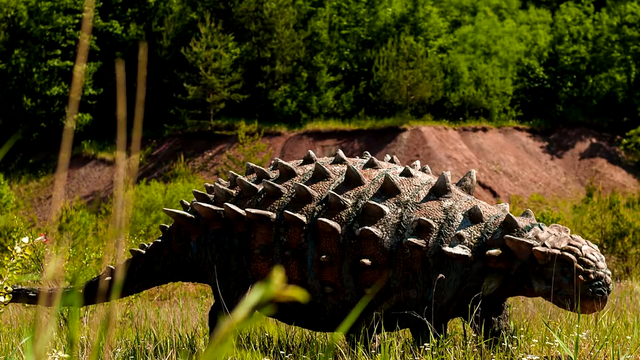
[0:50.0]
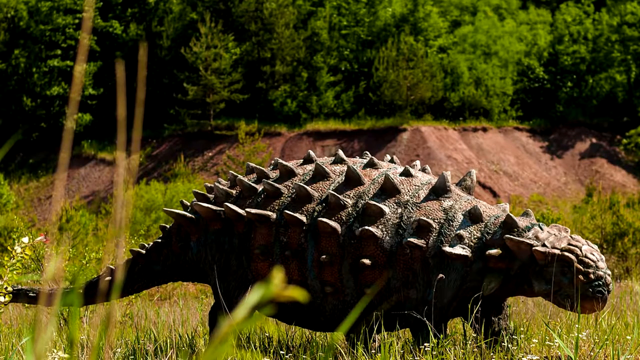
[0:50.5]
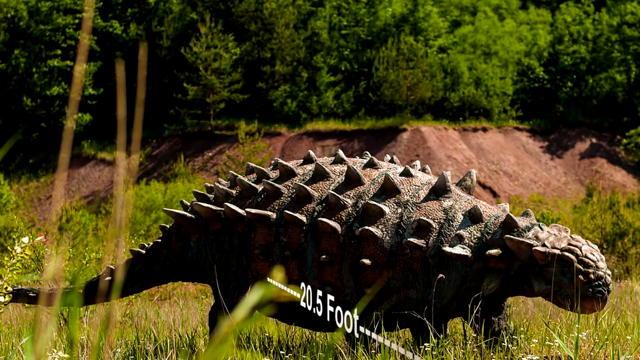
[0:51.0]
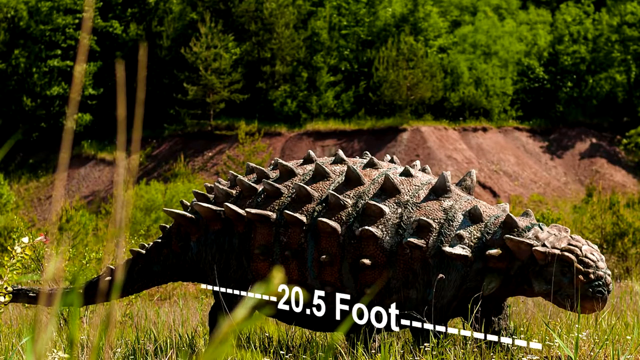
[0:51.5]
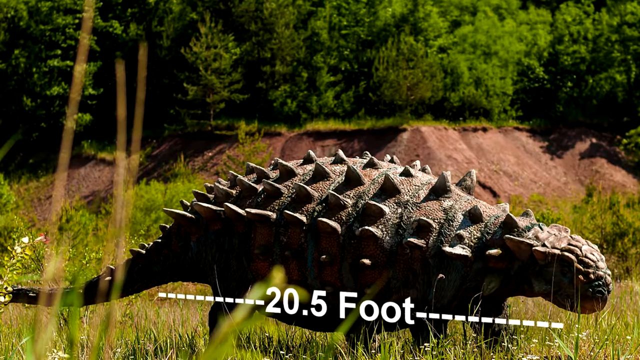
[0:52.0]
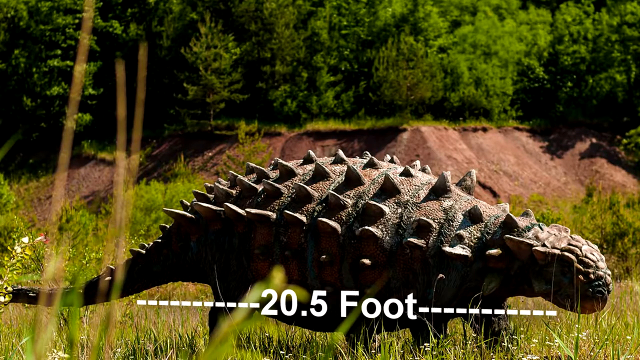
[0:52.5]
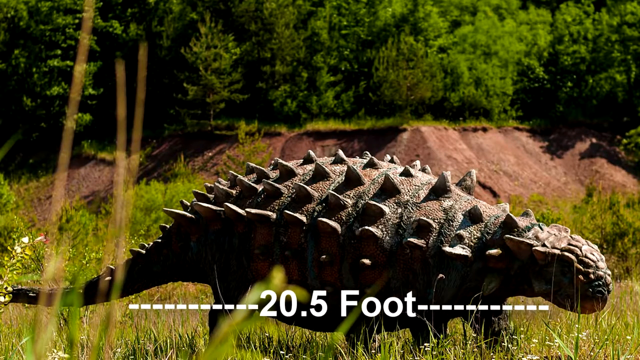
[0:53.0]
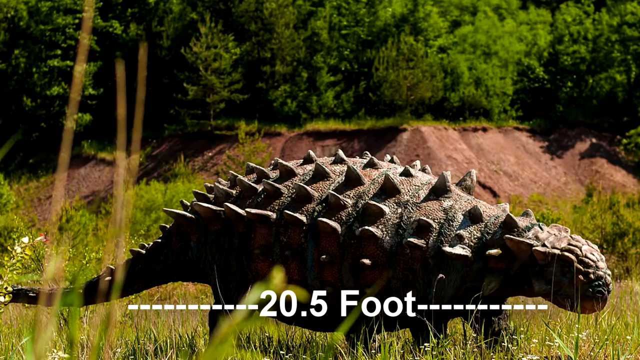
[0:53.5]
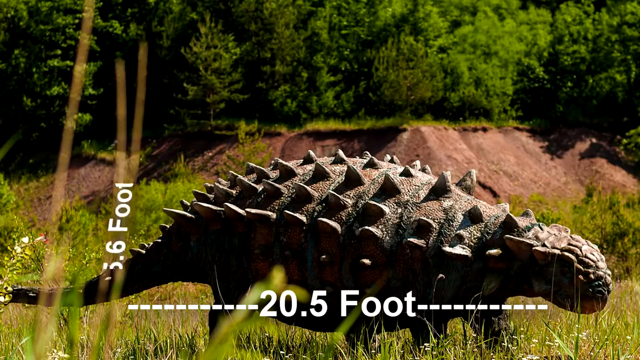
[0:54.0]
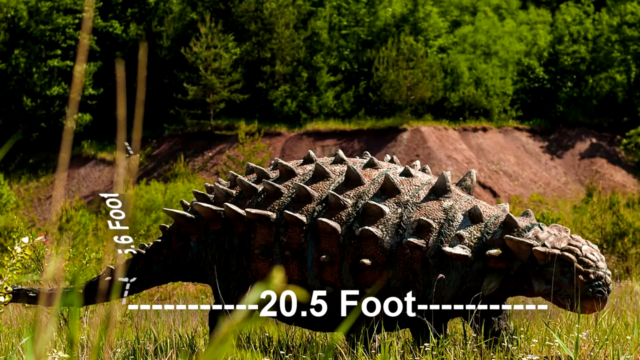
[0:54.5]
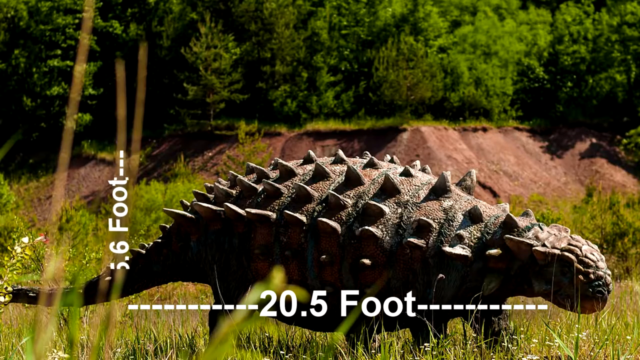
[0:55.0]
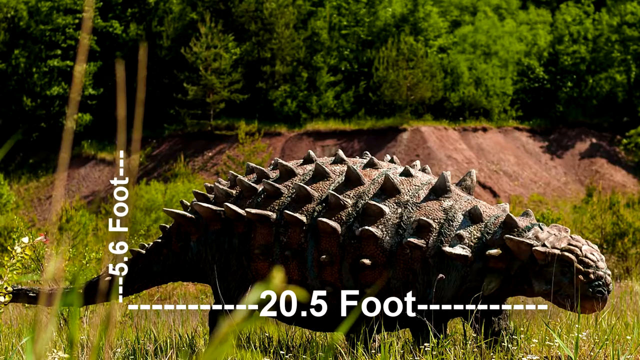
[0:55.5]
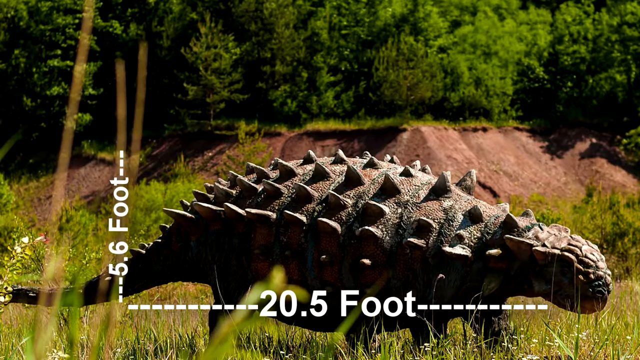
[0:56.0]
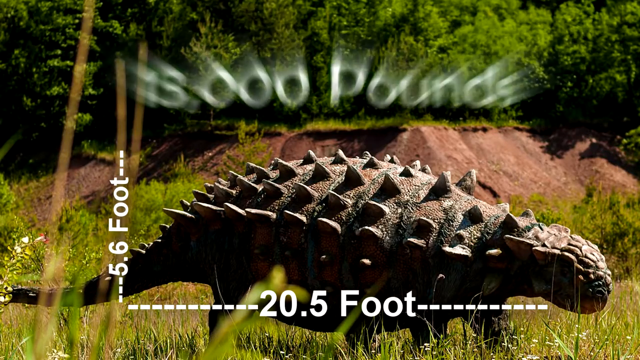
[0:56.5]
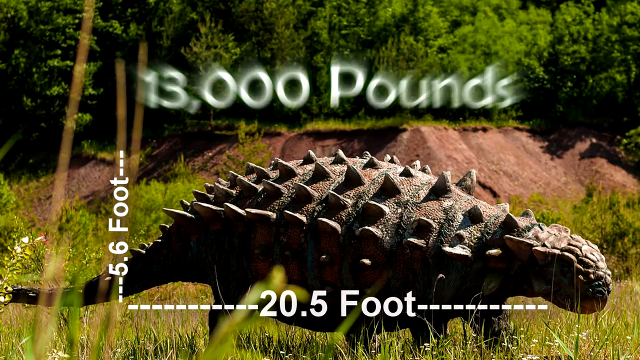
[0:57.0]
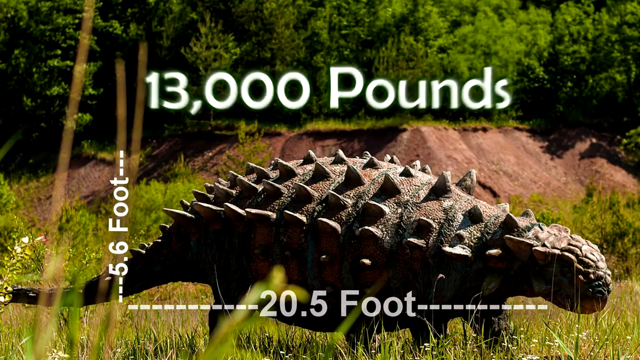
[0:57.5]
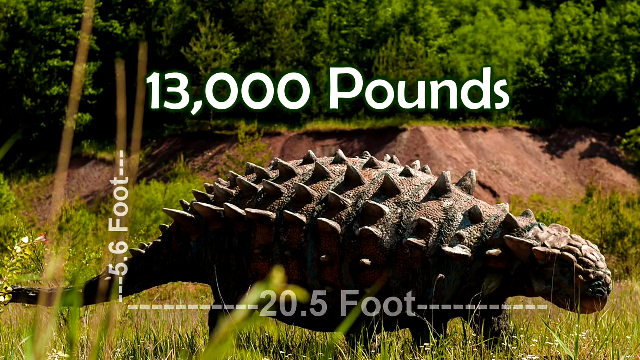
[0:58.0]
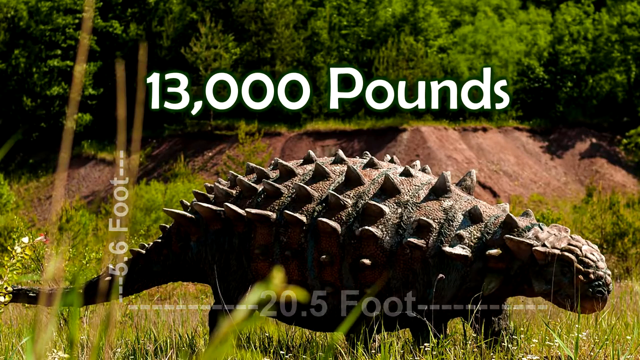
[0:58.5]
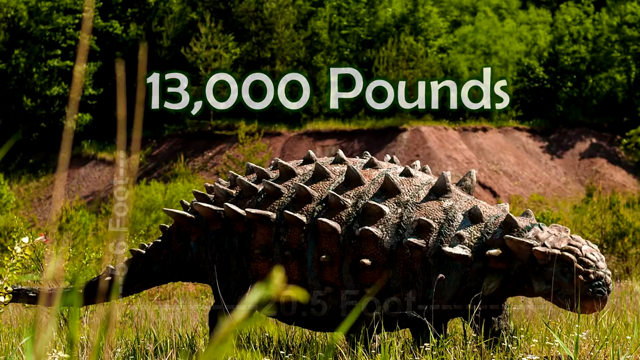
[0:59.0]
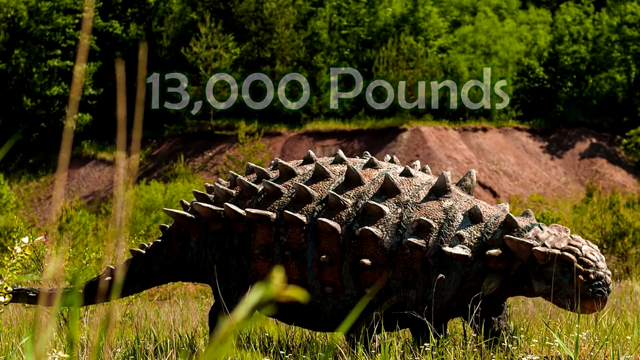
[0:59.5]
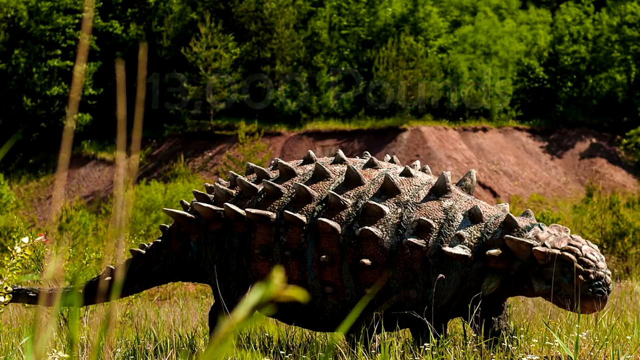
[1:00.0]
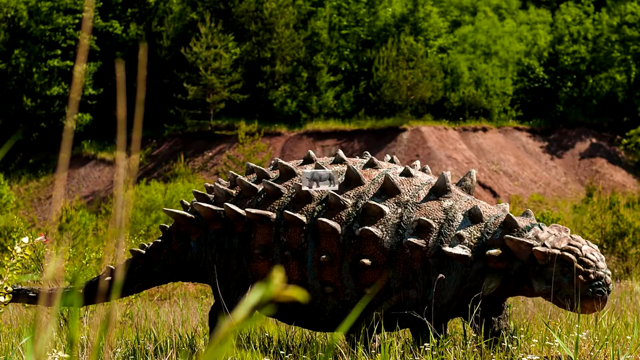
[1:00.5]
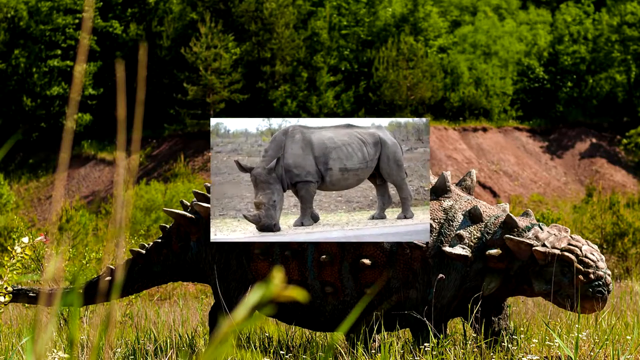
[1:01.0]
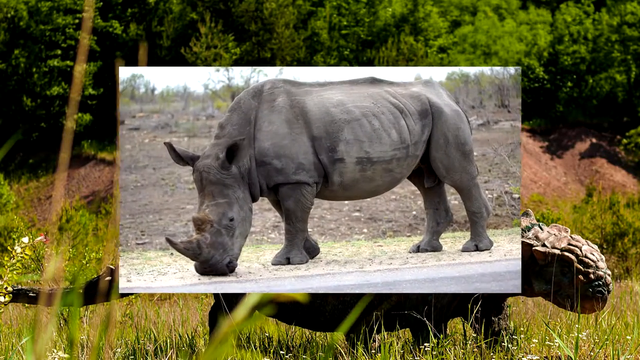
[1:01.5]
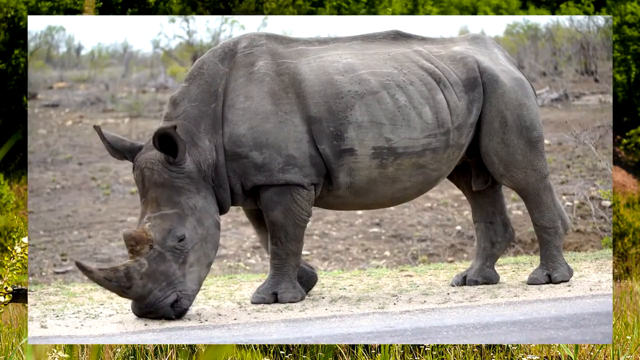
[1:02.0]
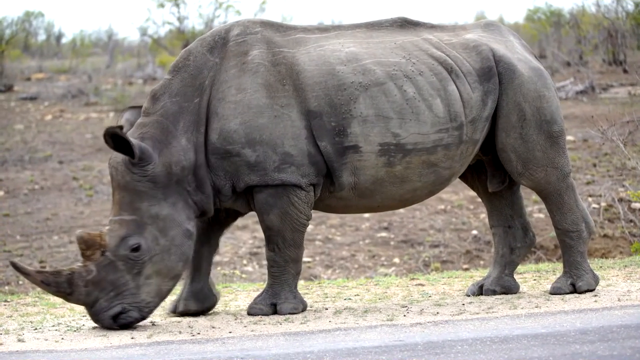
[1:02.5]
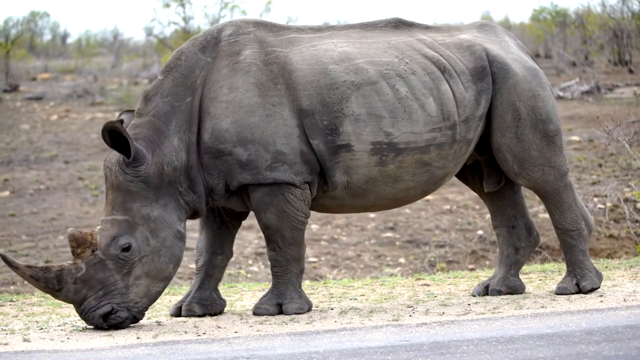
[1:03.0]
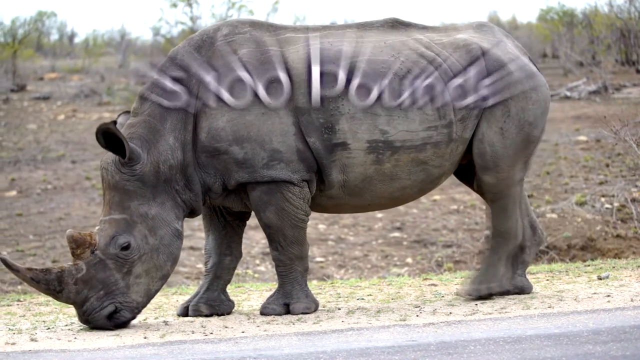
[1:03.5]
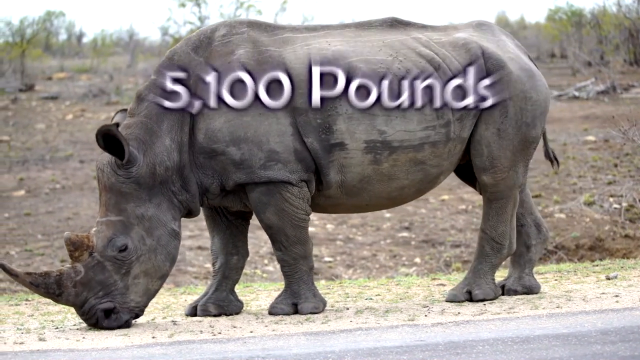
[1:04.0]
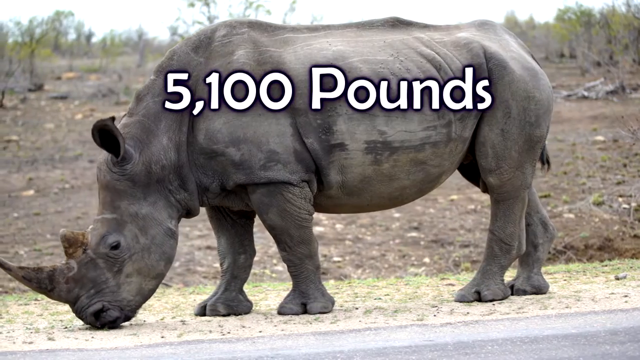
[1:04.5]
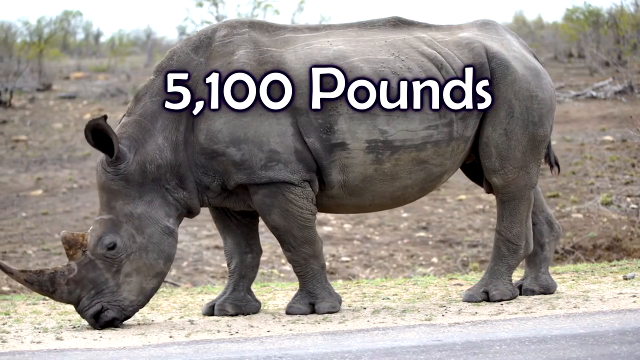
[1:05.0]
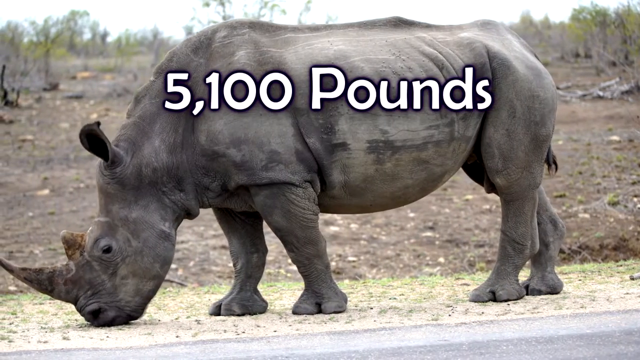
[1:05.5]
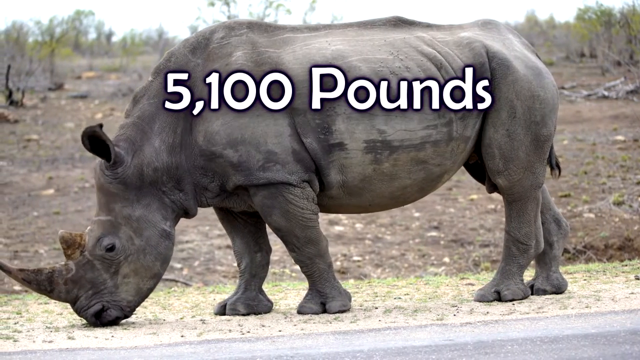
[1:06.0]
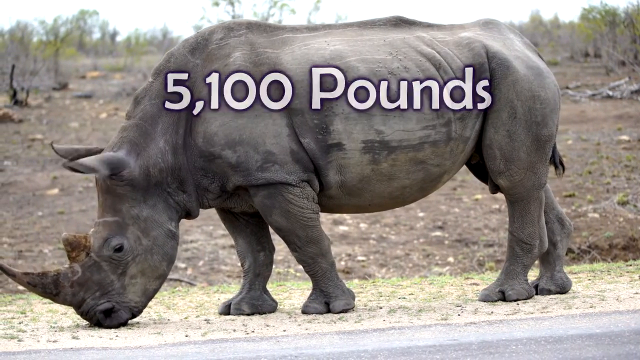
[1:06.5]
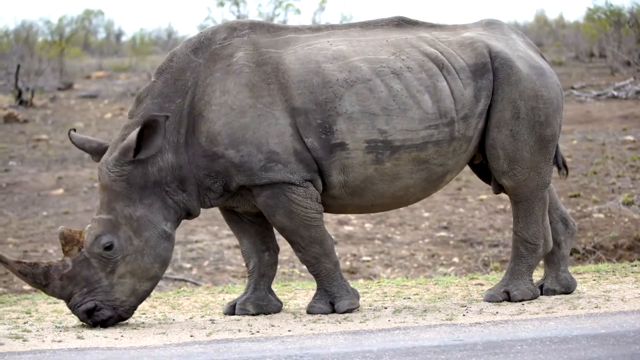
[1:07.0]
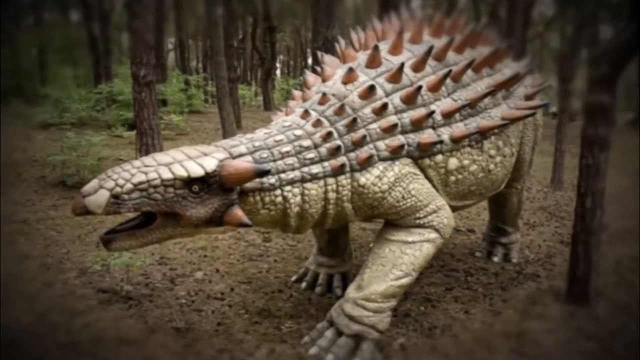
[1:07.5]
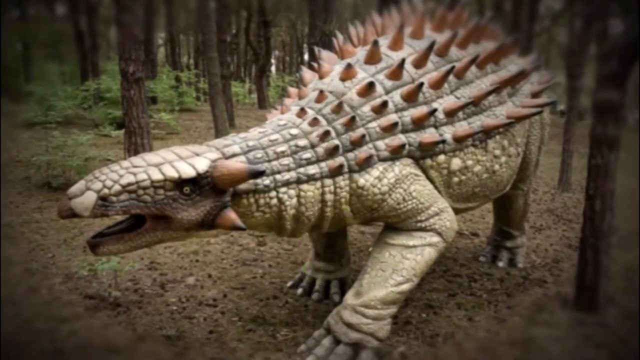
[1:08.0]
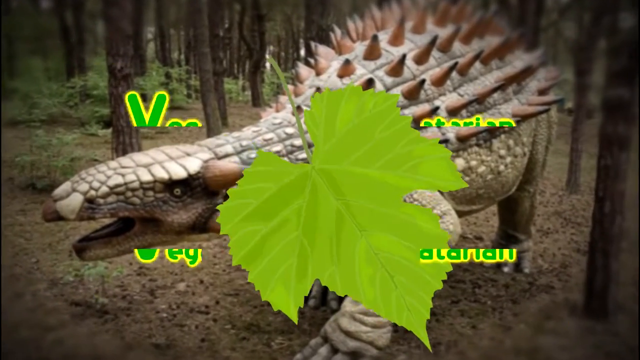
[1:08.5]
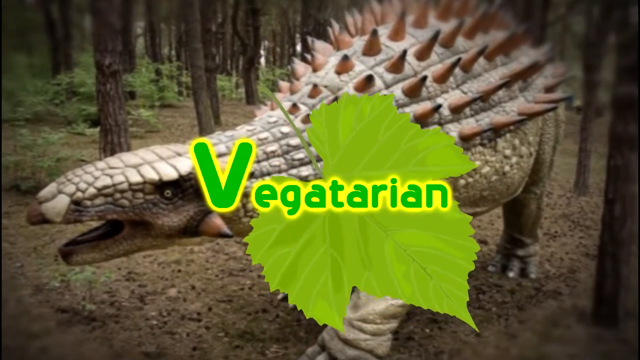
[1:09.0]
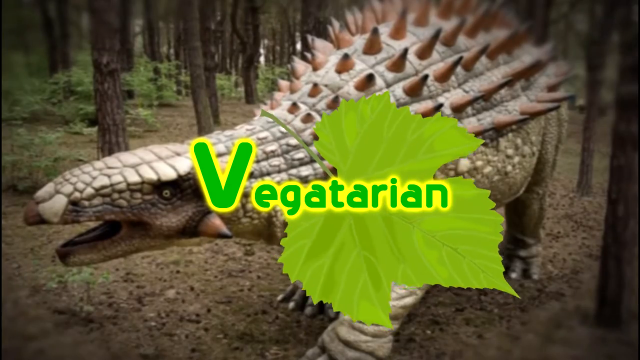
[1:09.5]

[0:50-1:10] An animation appears on the bottom part of the dinosaur's body, showing the text "20.5 foot" between a dashed line that extends from the head to the tip of the tail. Another line comes across the screen showing the dinosaur's height, again between a dashed white line, stating "5.6 feet." New text fades in at the top of the image stating that the dinosaur is "13,000 pounds." A clip of a rhino is shown, which has a look similar to the dinosaur. White text saying "5,100 pounds" fades in on top of the rhino's body. There is some mud on the rhino's belly, and its gray skin looks wrinkled on the side of its body where its back legs meet the body. On another previously shown image of the dinosaur, an animation of a leaf is displayed with the word "vegetarian."